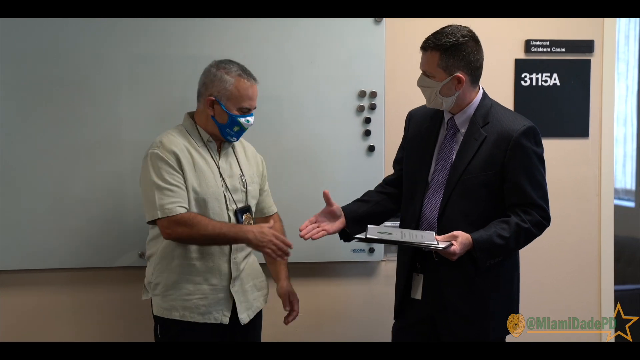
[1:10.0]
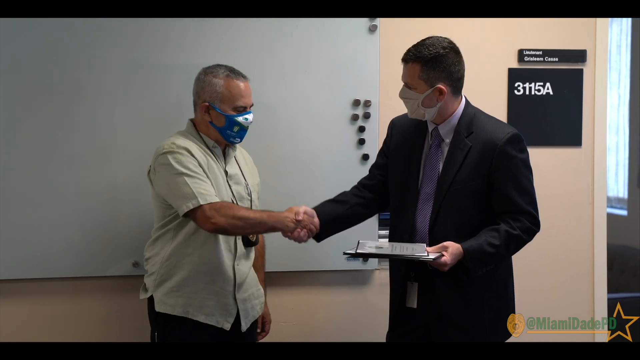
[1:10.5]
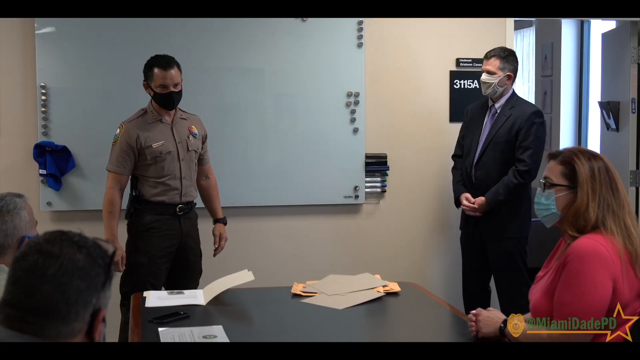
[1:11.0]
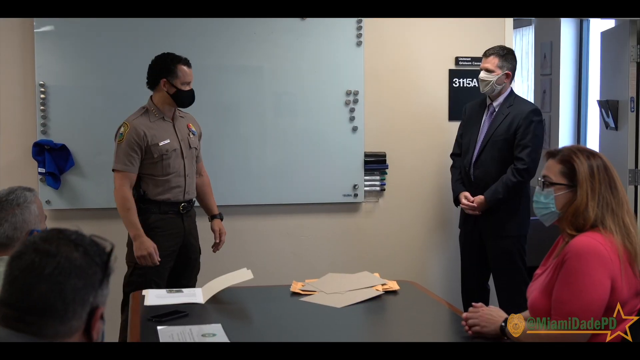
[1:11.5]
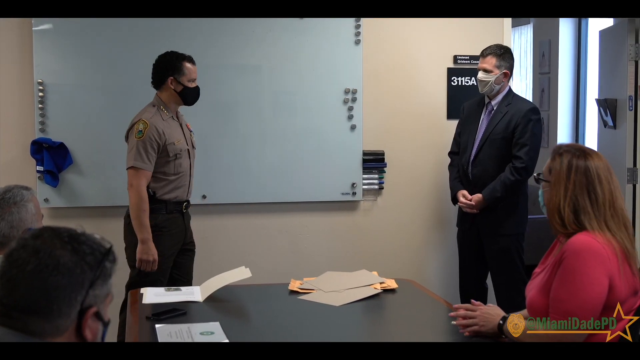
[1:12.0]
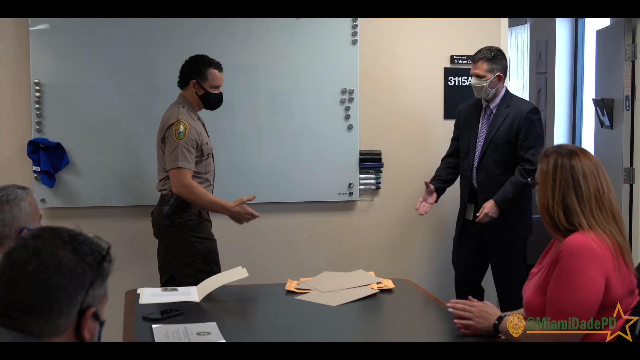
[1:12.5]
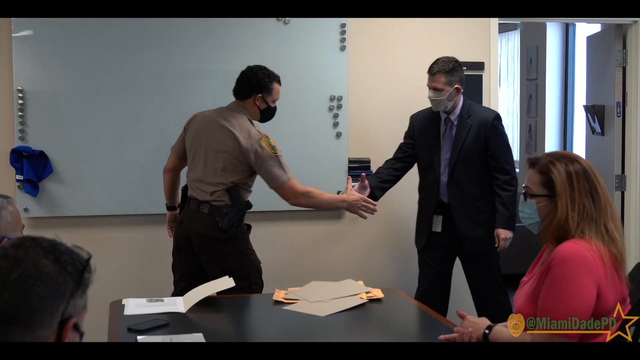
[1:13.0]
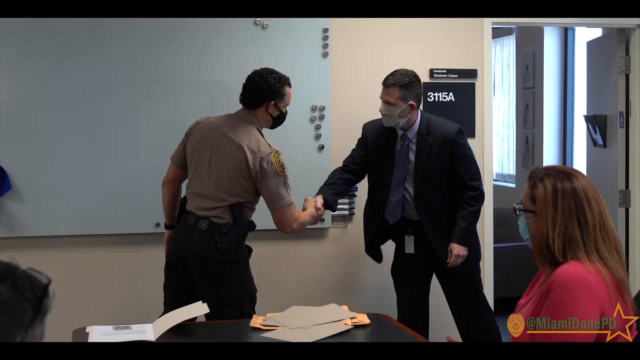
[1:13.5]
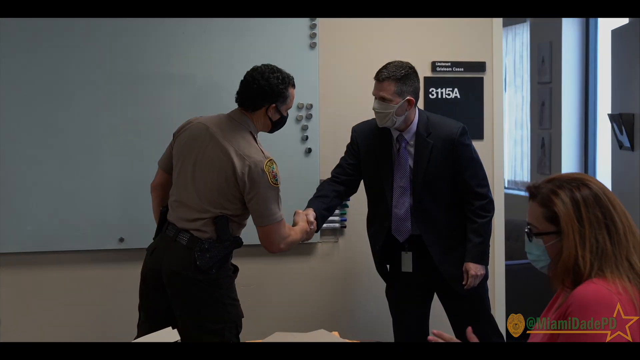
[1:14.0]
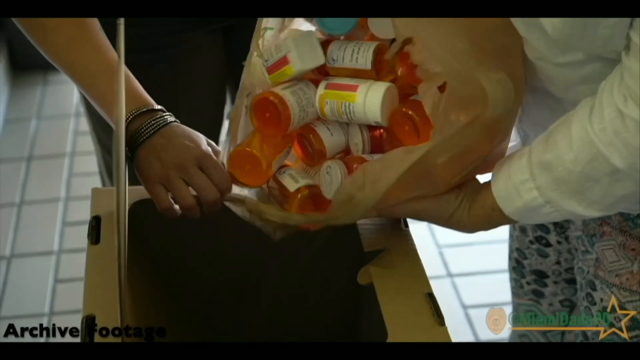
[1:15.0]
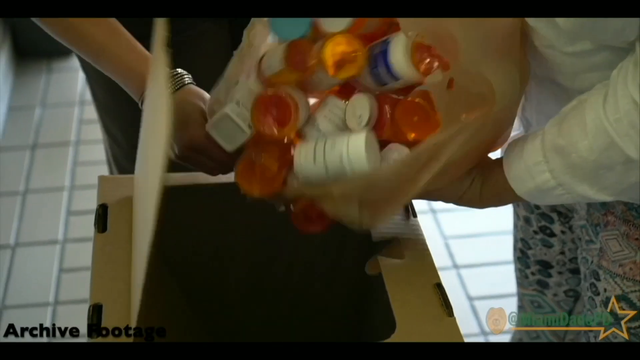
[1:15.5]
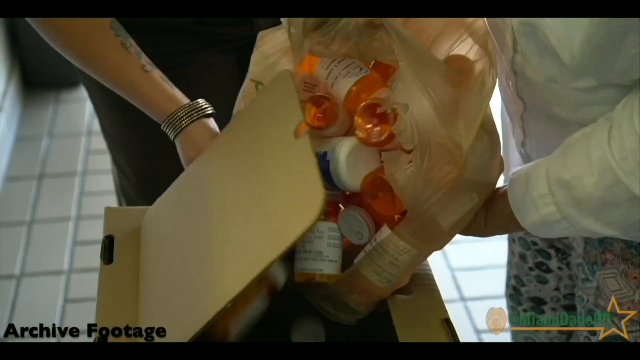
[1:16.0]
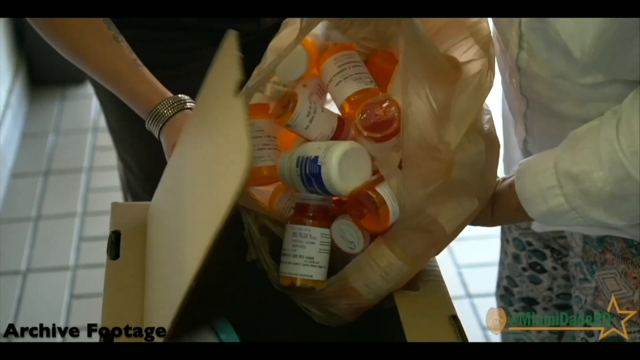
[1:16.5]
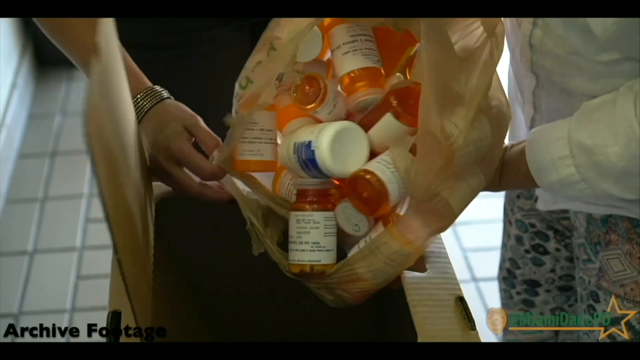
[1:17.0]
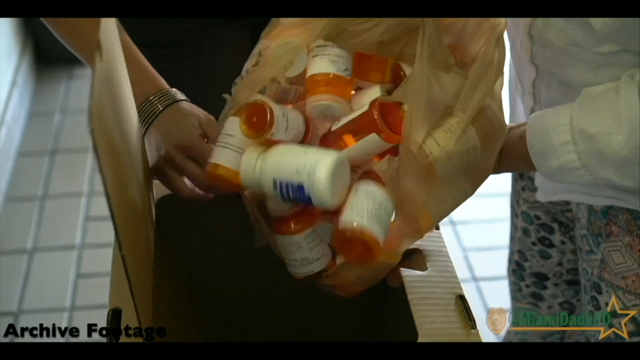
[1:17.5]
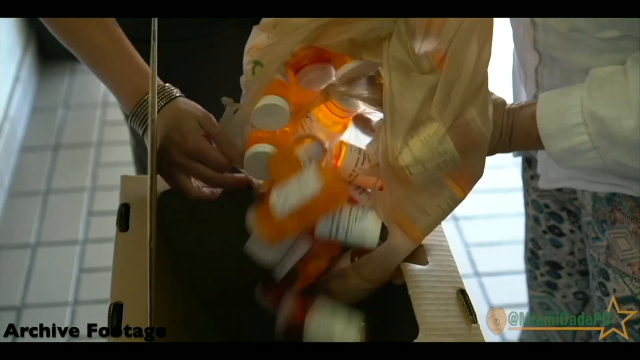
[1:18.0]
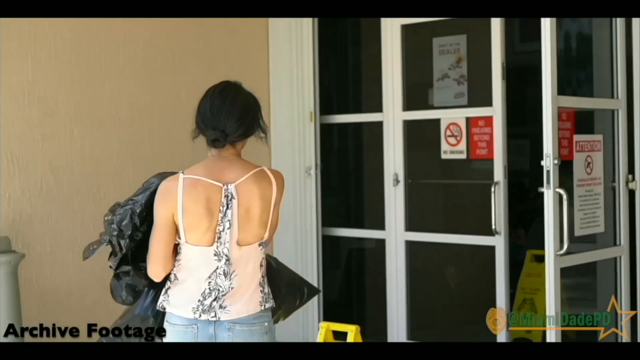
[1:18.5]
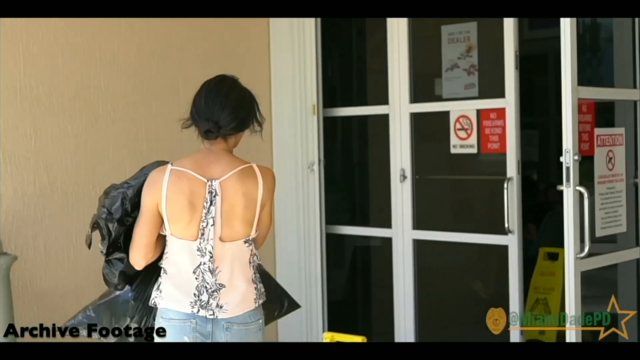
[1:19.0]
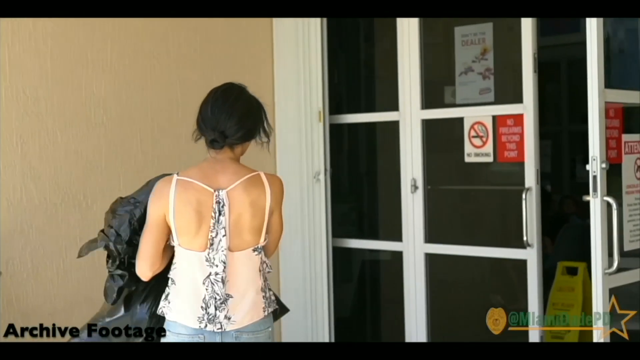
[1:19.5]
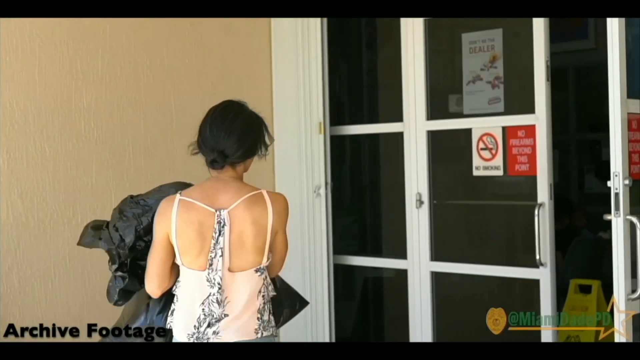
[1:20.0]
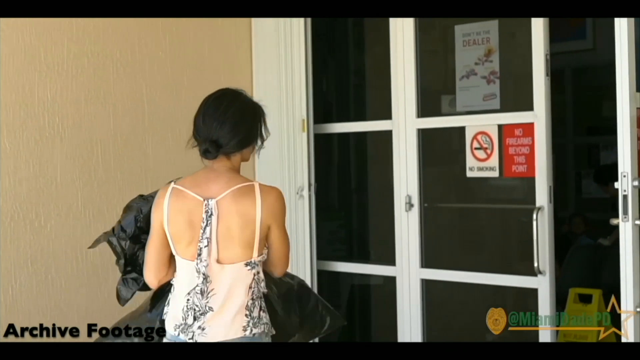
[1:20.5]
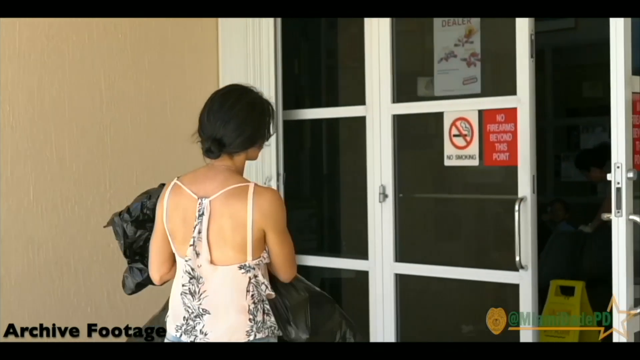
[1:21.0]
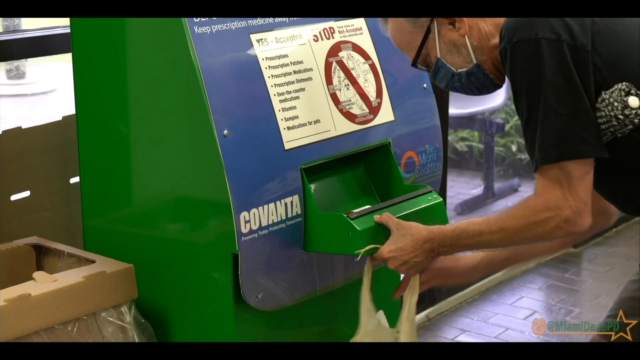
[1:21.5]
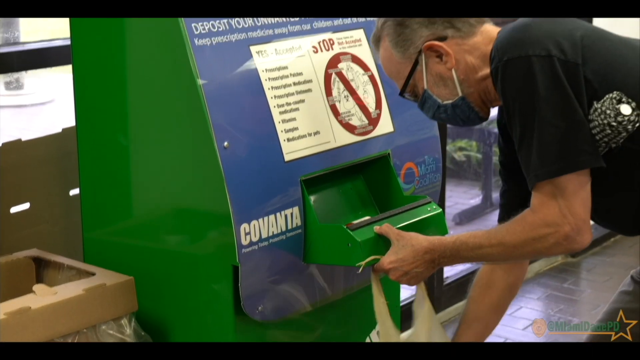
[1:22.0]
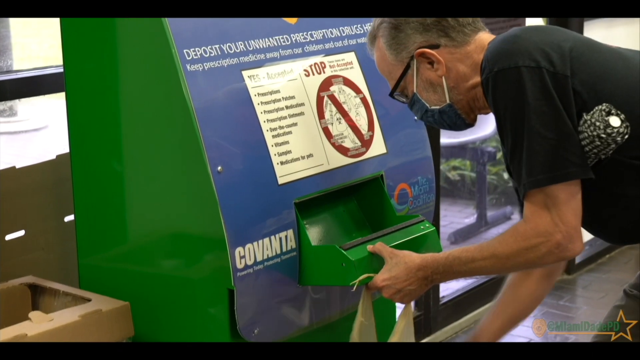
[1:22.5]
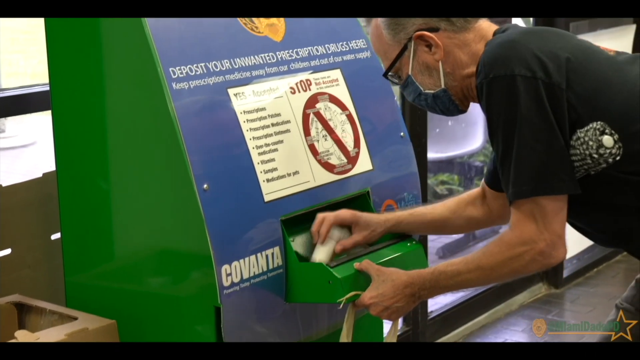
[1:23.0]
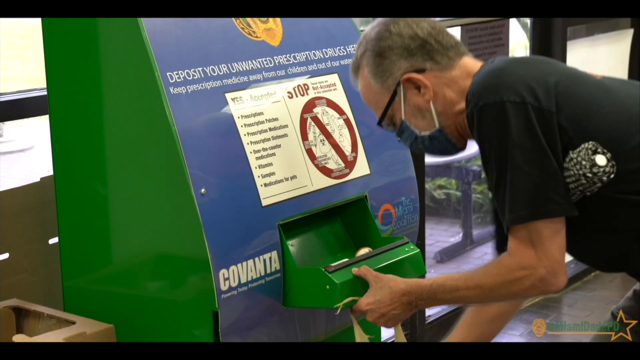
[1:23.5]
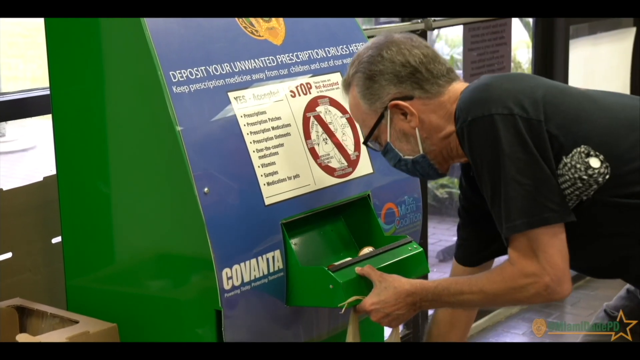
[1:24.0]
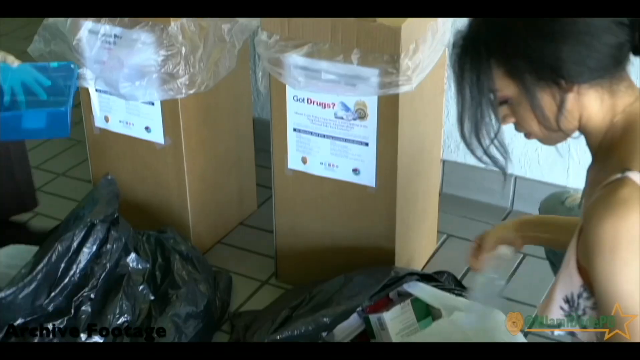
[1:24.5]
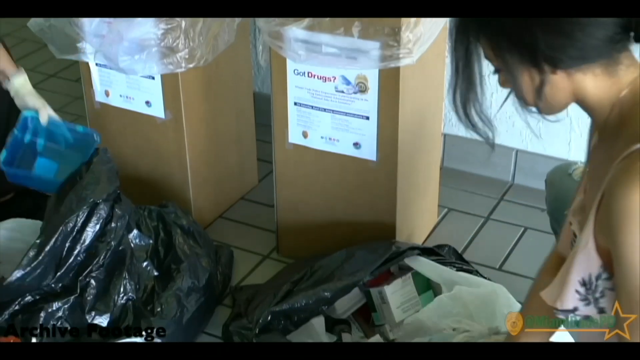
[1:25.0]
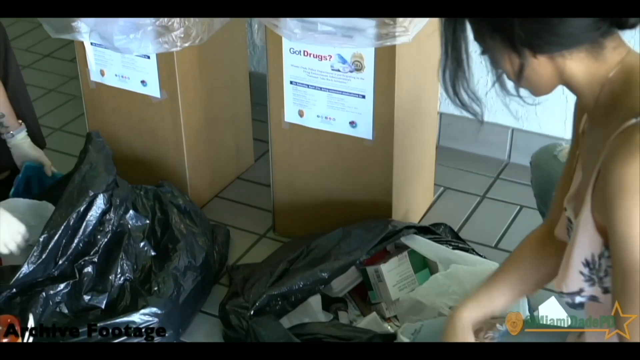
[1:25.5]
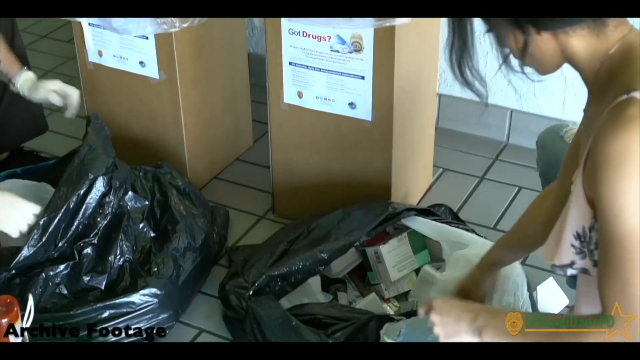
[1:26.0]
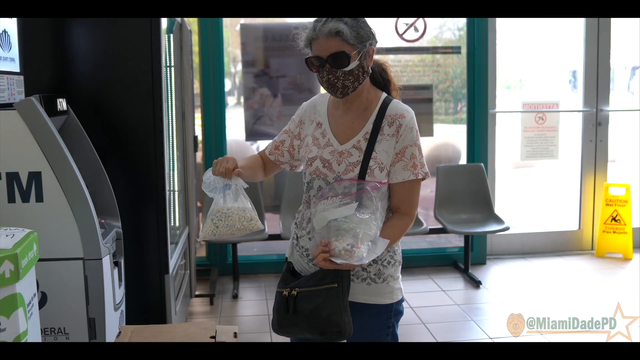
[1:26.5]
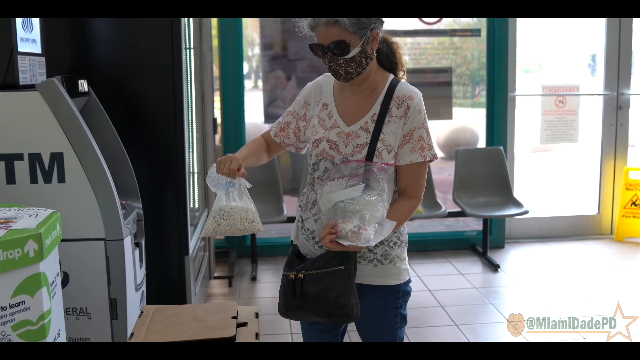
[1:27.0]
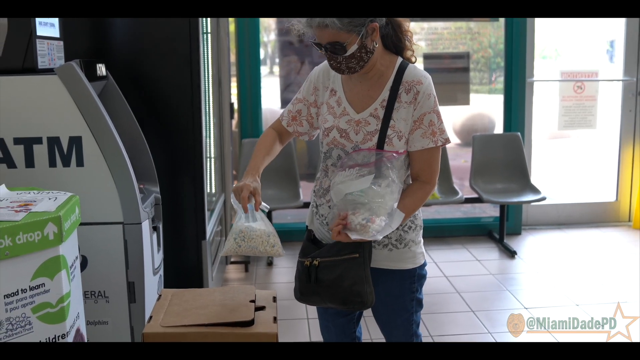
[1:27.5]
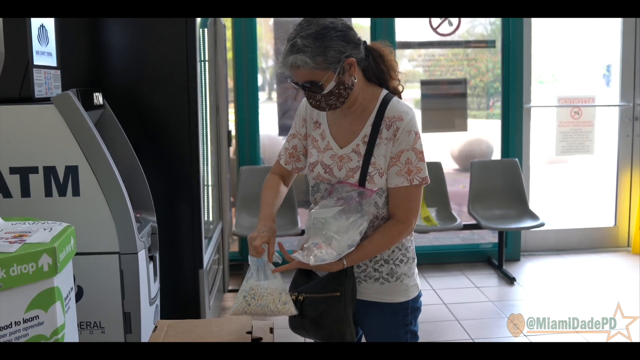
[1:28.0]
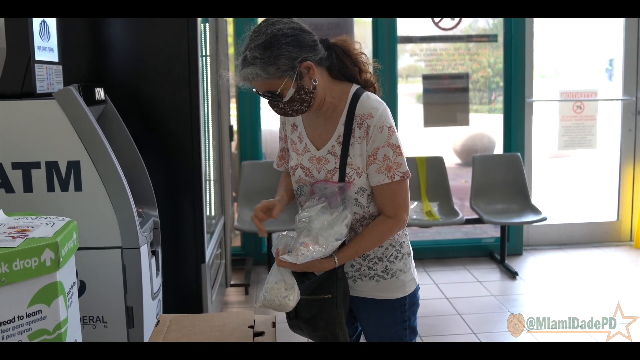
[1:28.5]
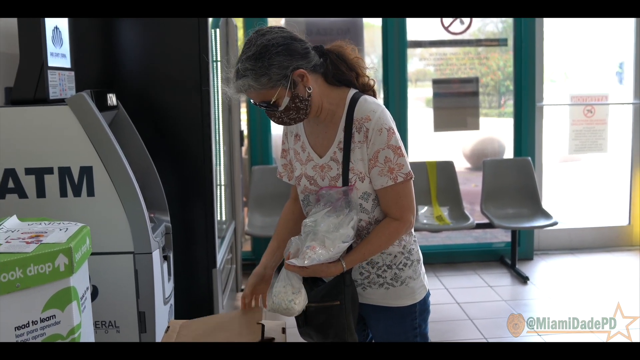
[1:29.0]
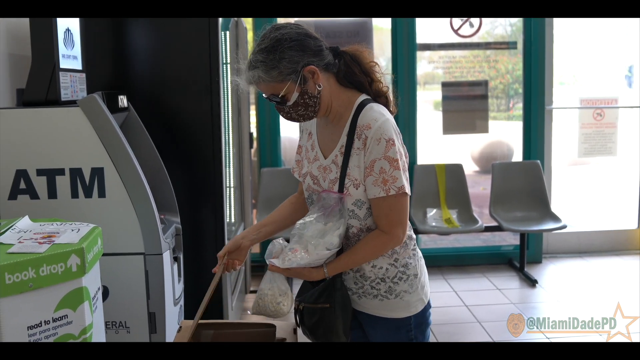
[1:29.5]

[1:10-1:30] After the homicide notice and its contact details, the screen says to identify the driver and the car and gives information on how it should be identified. An award is then given, appreciating people's hard work and what they do for the department.